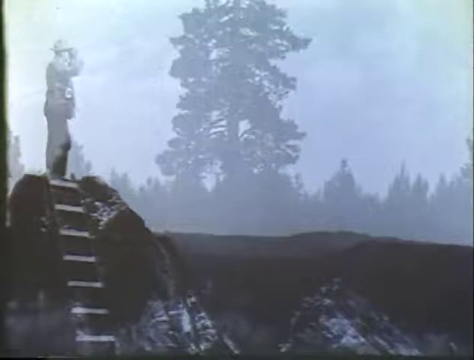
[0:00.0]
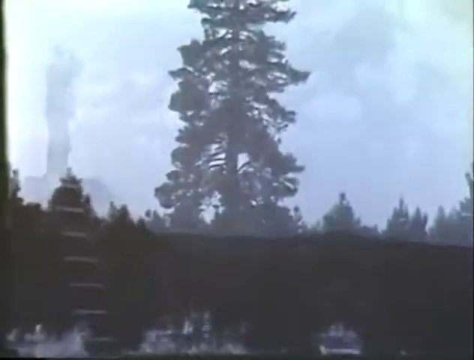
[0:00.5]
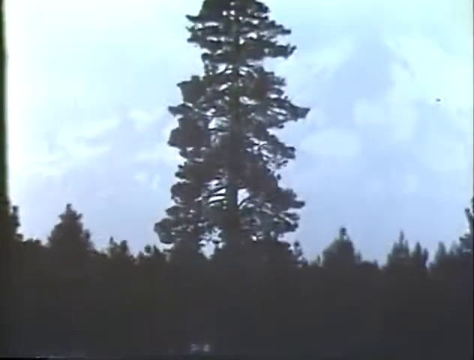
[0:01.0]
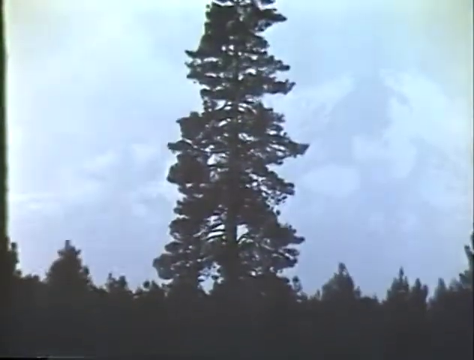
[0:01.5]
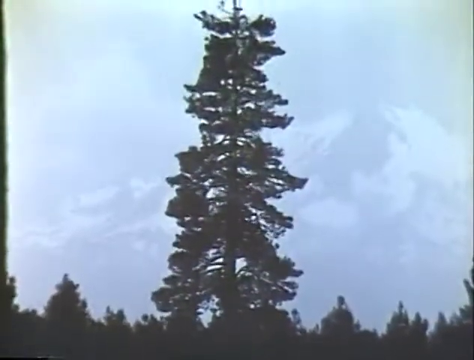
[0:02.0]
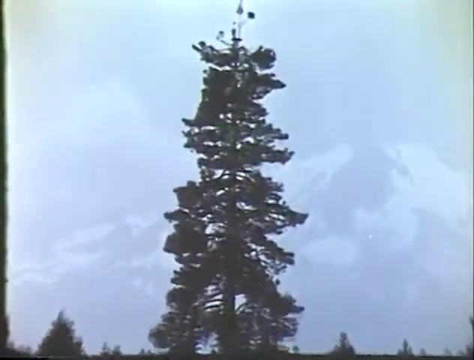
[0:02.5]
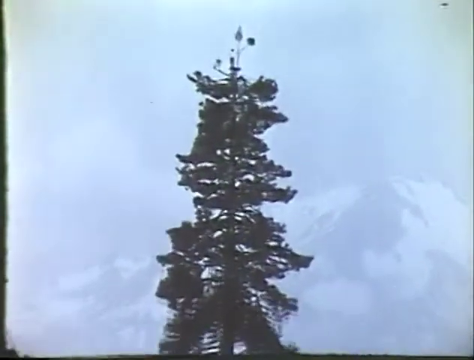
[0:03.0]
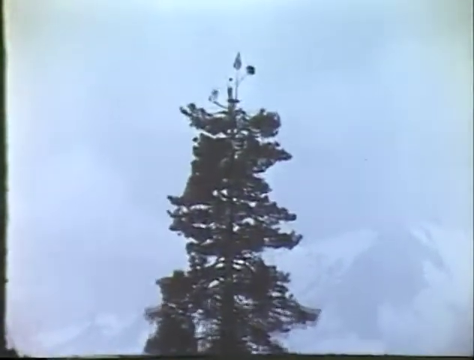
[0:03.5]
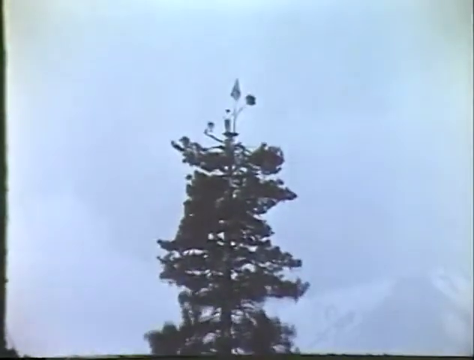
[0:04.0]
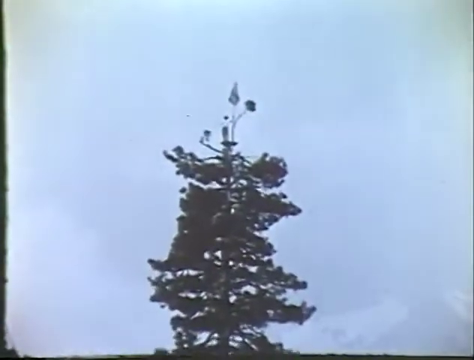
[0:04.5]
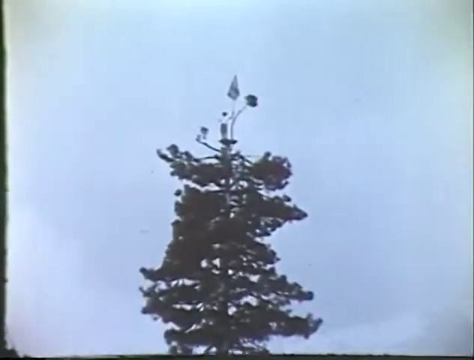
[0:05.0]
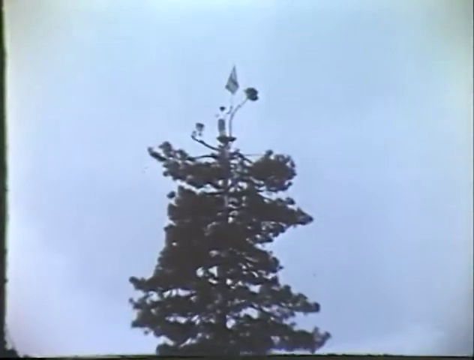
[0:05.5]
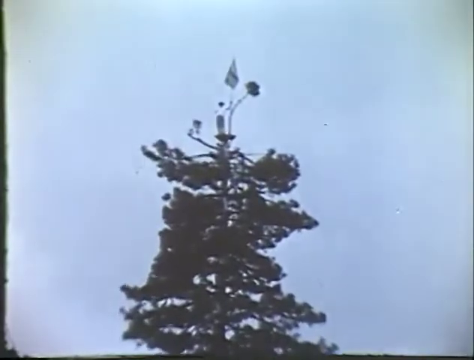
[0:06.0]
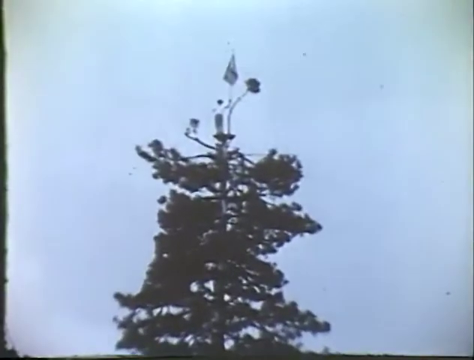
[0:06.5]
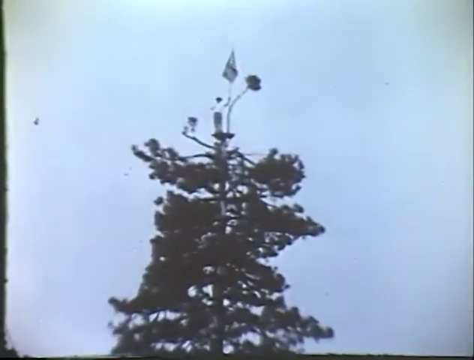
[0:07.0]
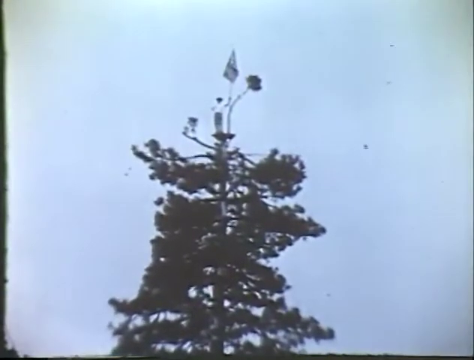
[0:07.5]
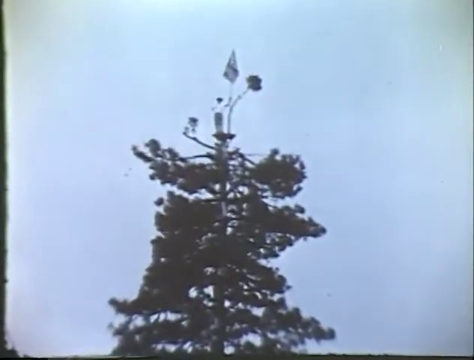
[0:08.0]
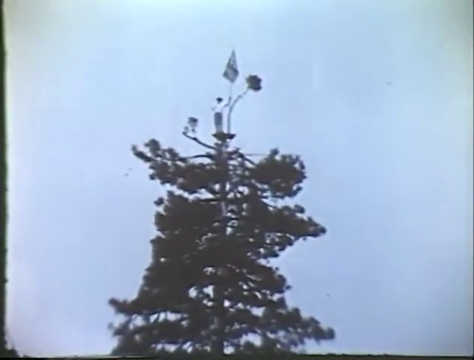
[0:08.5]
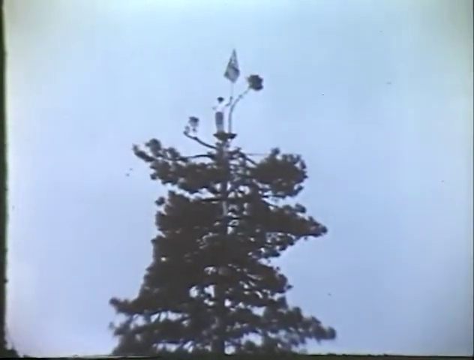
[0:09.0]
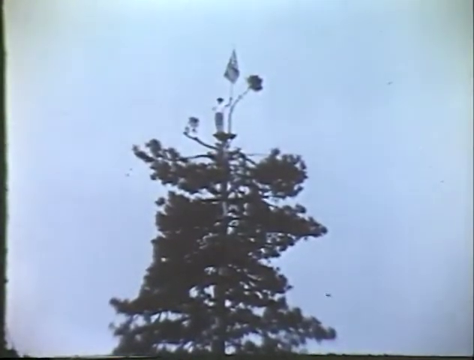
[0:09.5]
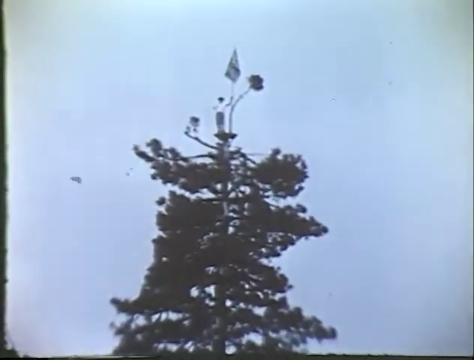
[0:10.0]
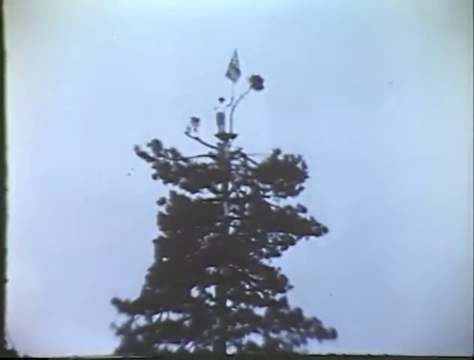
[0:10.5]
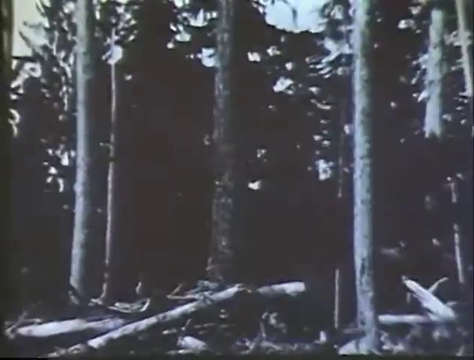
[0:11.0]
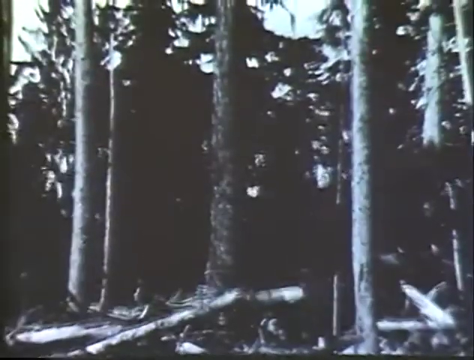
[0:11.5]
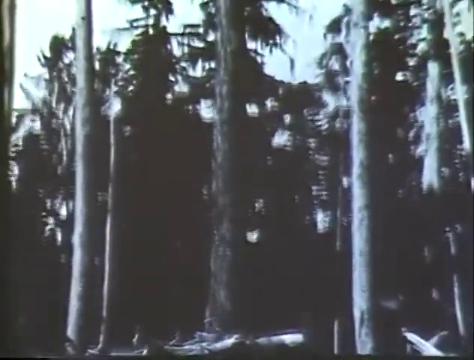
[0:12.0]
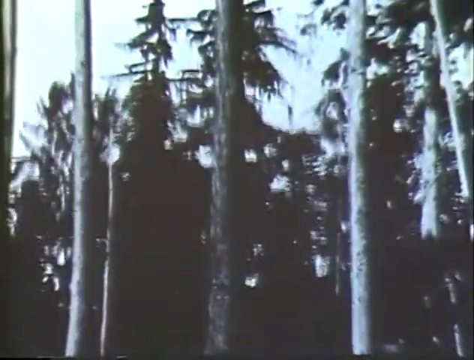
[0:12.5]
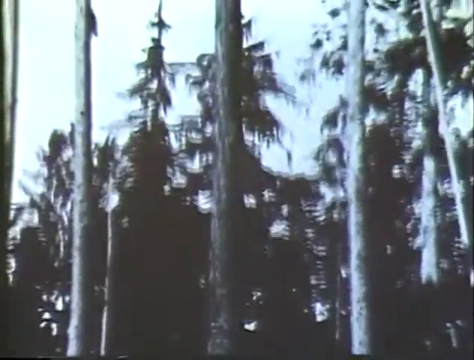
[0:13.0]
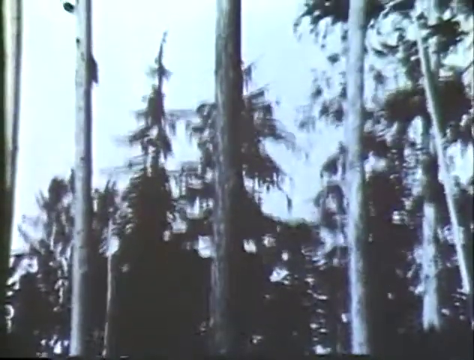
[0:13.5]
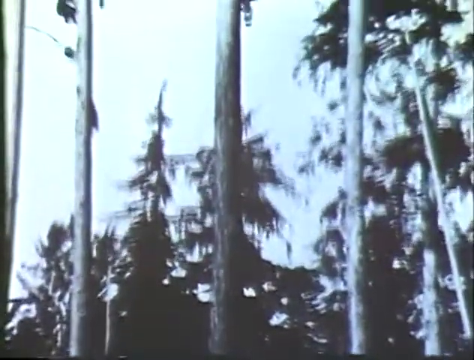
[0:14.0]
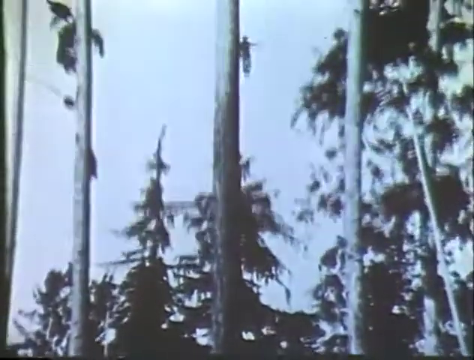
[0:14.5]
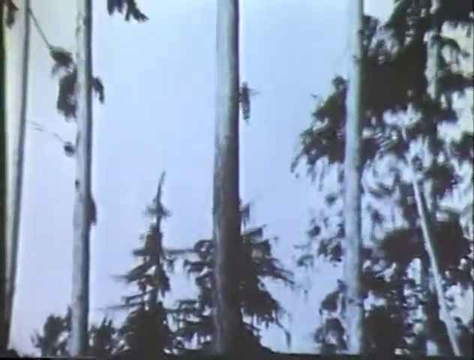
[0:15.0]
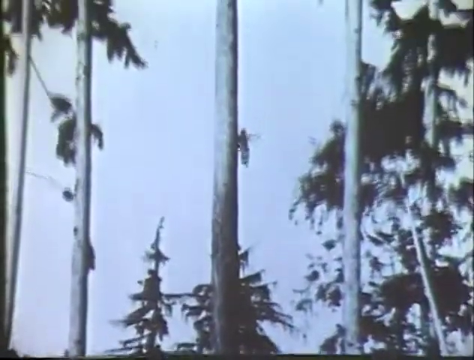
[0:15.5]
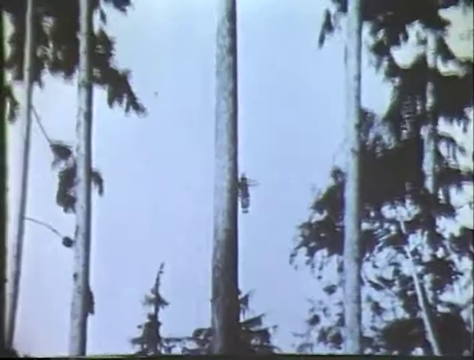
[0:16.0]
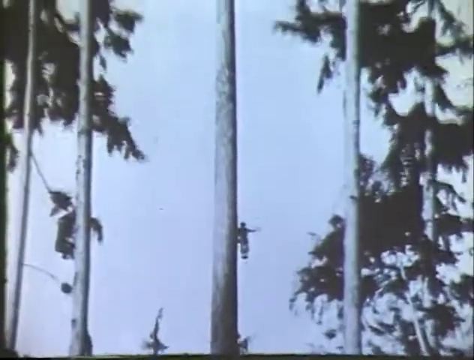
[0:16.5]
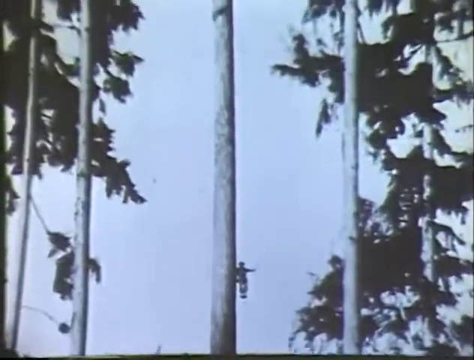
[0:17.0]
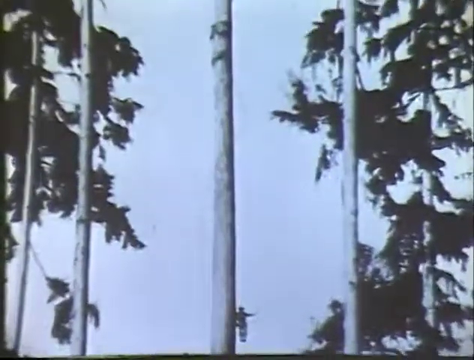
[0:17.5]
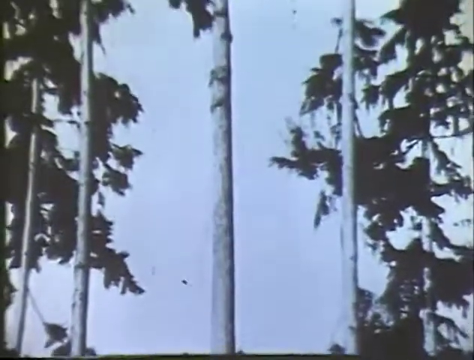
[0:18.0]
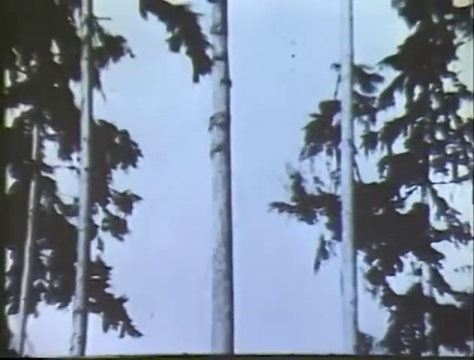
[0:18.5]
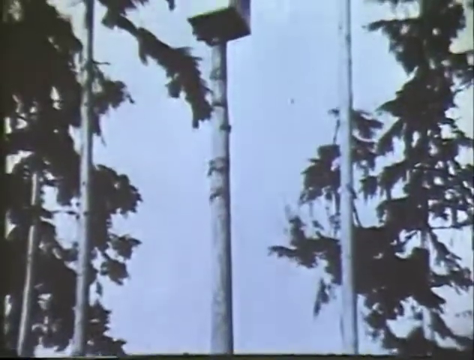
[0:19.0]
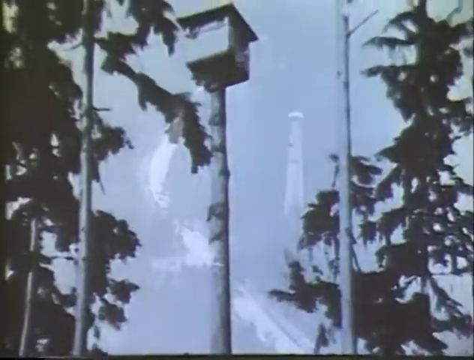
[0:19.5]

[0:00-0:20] The black and white video opens on some trees standing in the distance, with the outline of a snow-covered mountain vaguely visible behind them. In the center foreground there is an enormously tall pine tree, and the camera pans up to its top. Poised at the top is a small platform with a figure standing on it; at this distance it is hard to tell whether the figure is male or female. The figure has dark hair, wears darker pants and a white shirt, and appears to be holding a flag aloft. The camera zooms in on the figure and pauses for a moment. The image then changes to some bare tree trunks standing together, four or five of them in the frame. The camera again pans slowly upward, and the trunks gradually gain branches along their lengths. Near the top of the image the trunks reach all the way to the sky, which appears overcast. Halfway up one of the trunks in the center, a person is suspended, and at the top of that trunk there is a wooden box with a roof.